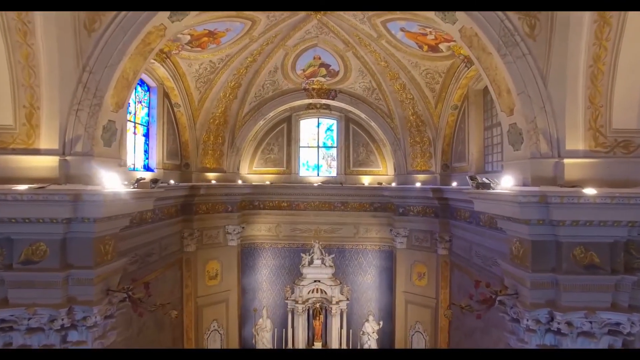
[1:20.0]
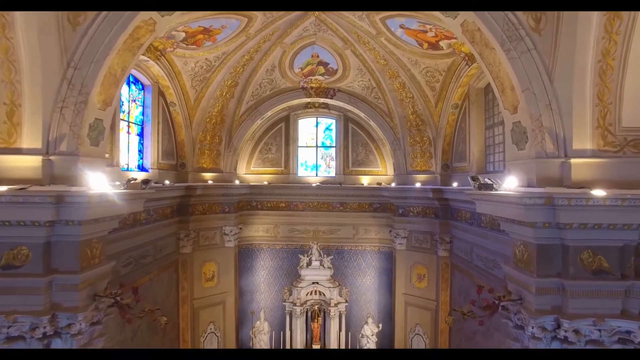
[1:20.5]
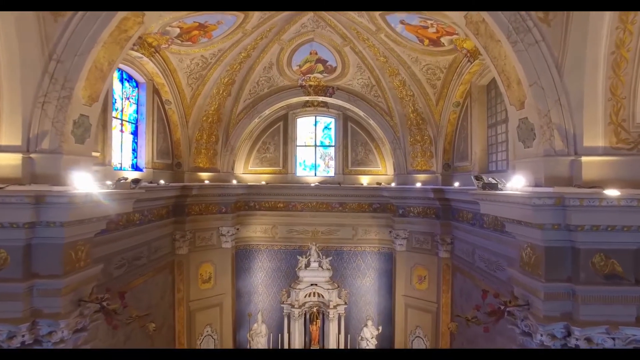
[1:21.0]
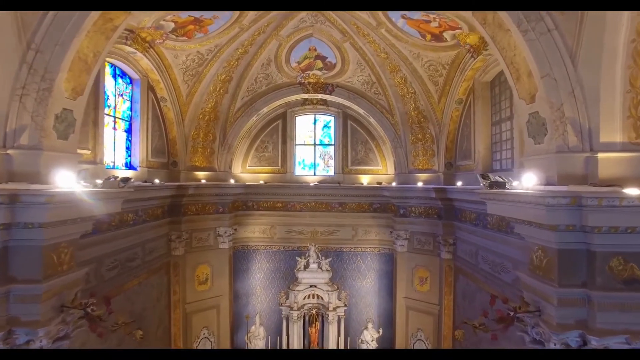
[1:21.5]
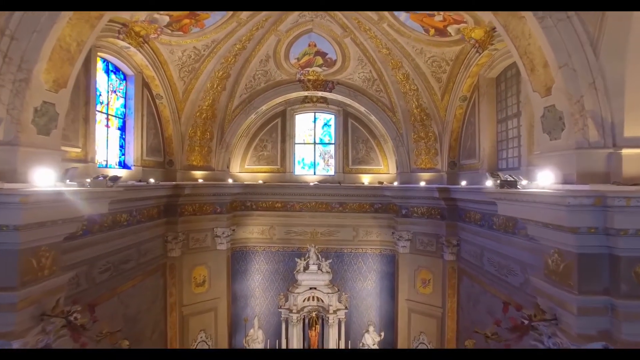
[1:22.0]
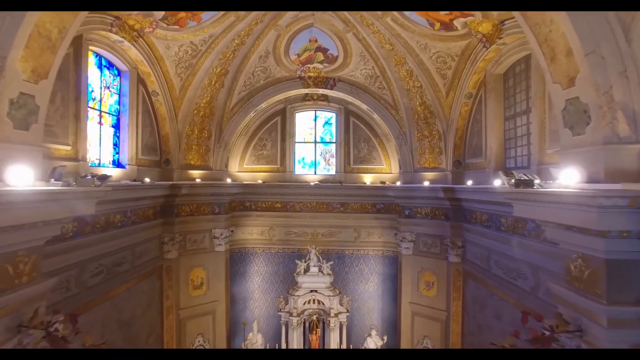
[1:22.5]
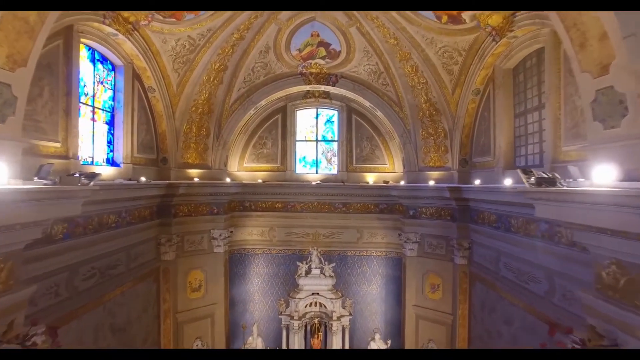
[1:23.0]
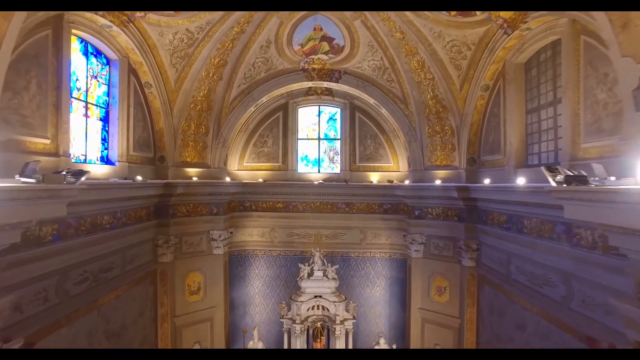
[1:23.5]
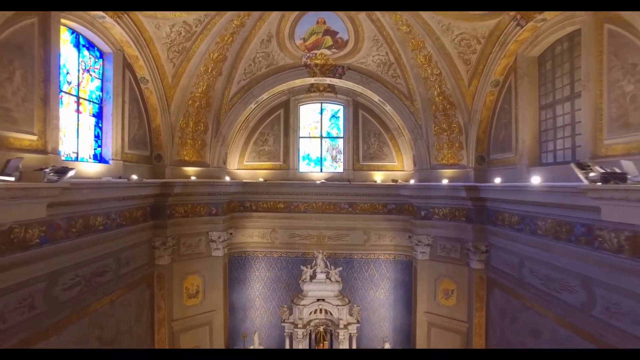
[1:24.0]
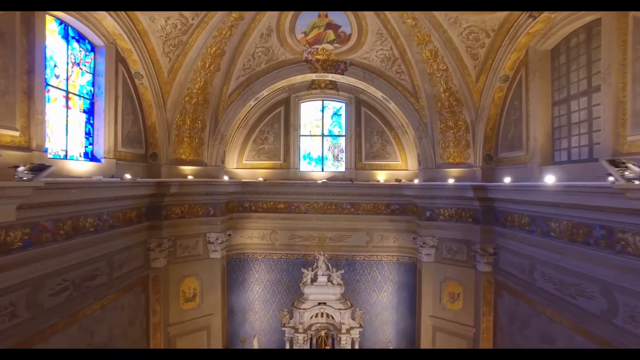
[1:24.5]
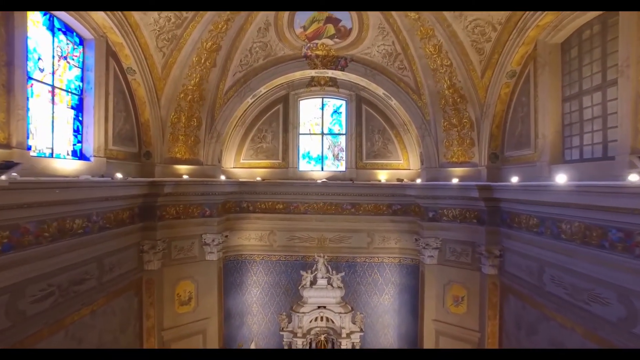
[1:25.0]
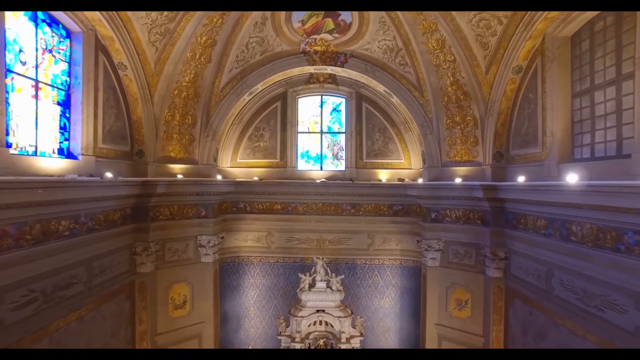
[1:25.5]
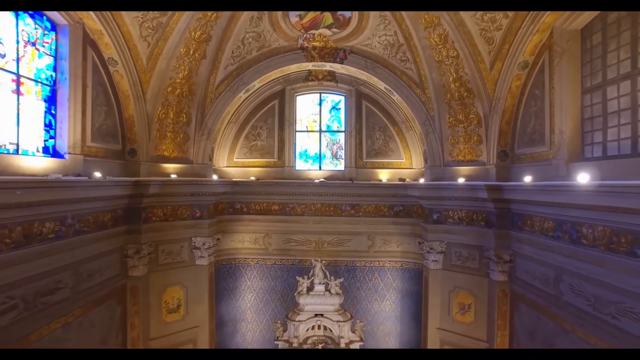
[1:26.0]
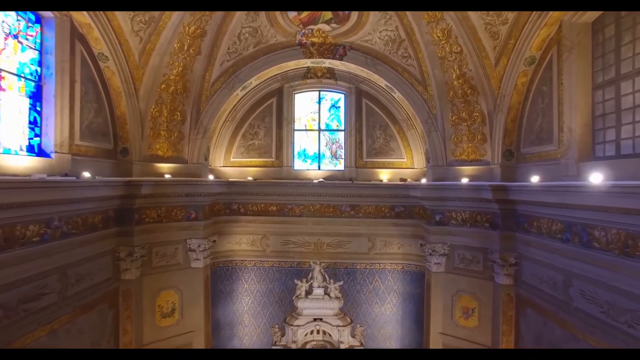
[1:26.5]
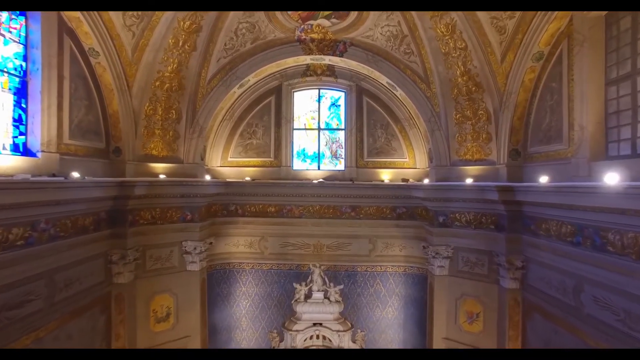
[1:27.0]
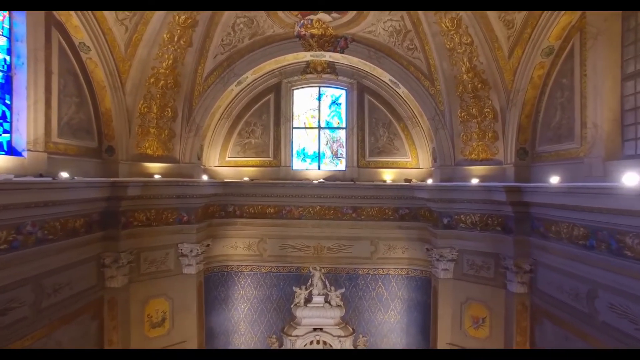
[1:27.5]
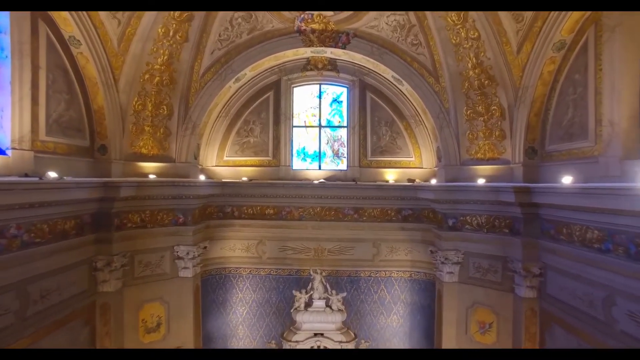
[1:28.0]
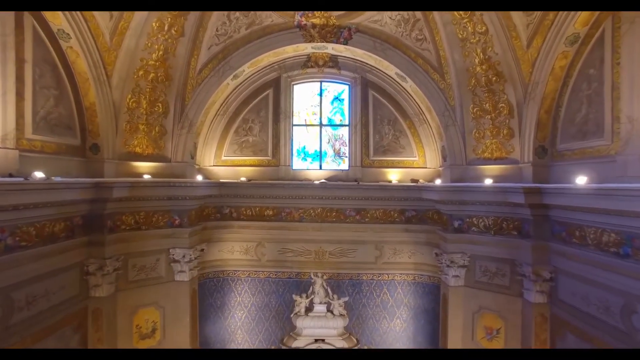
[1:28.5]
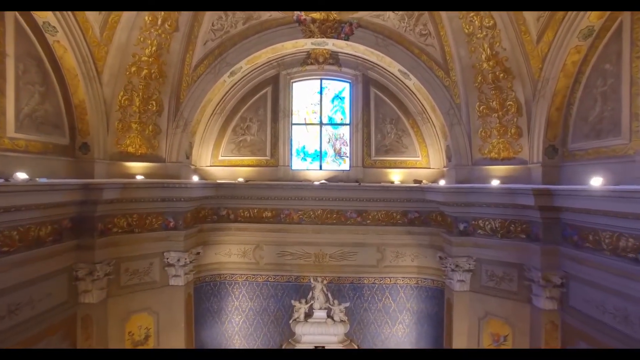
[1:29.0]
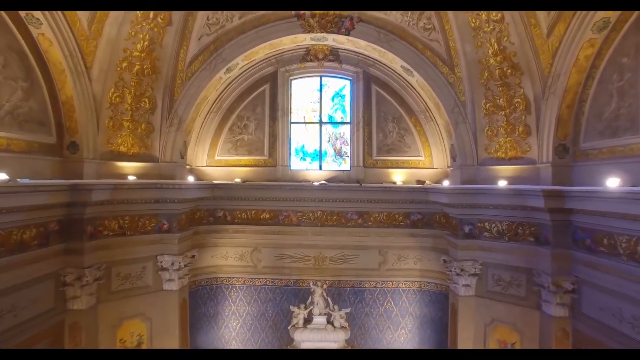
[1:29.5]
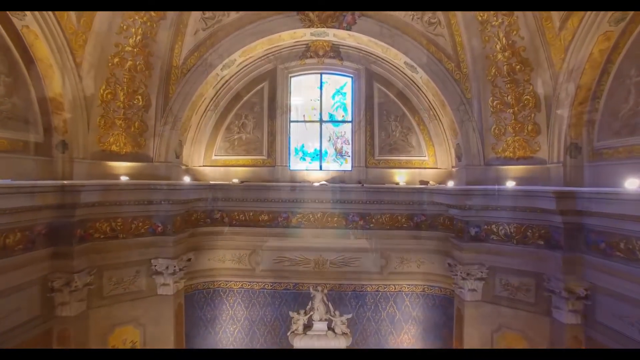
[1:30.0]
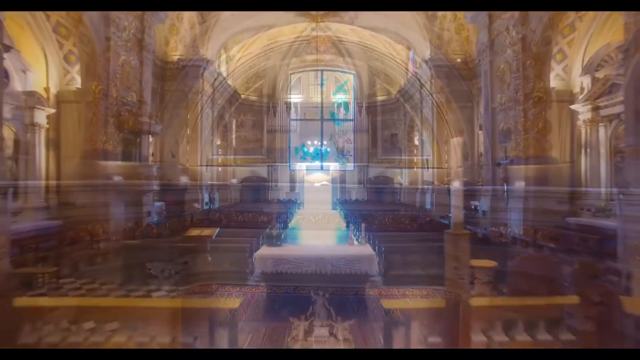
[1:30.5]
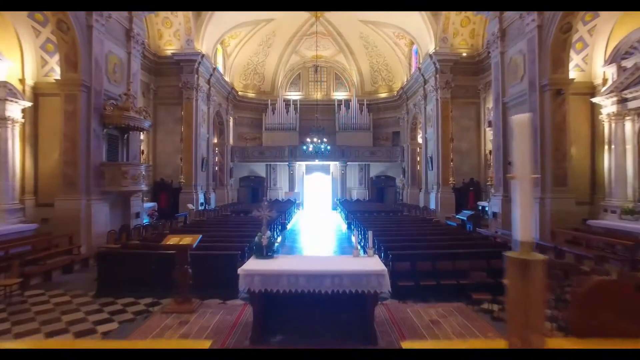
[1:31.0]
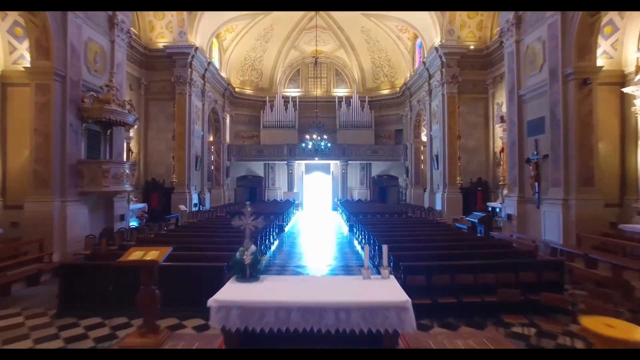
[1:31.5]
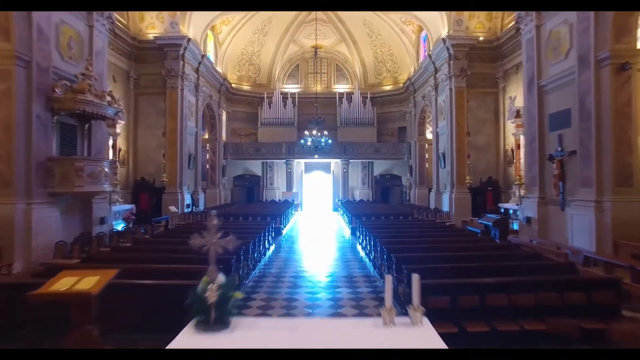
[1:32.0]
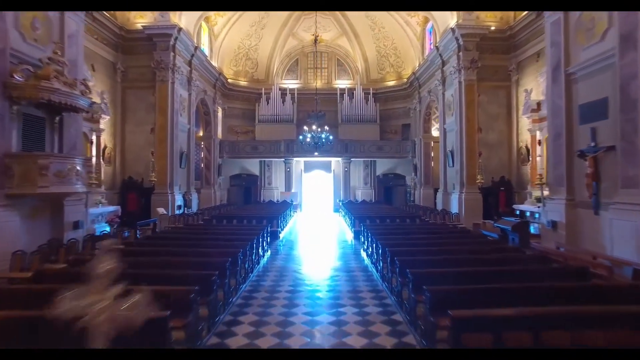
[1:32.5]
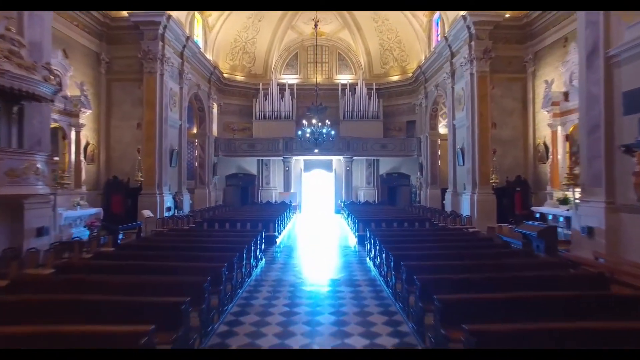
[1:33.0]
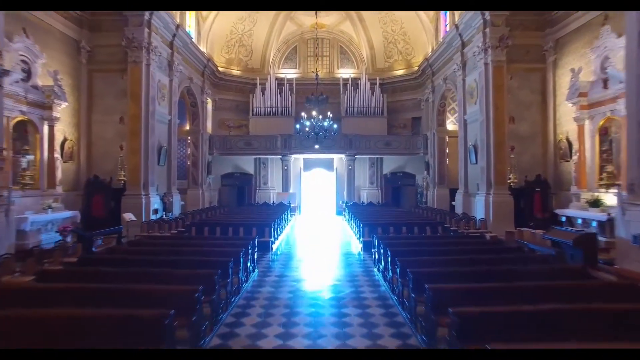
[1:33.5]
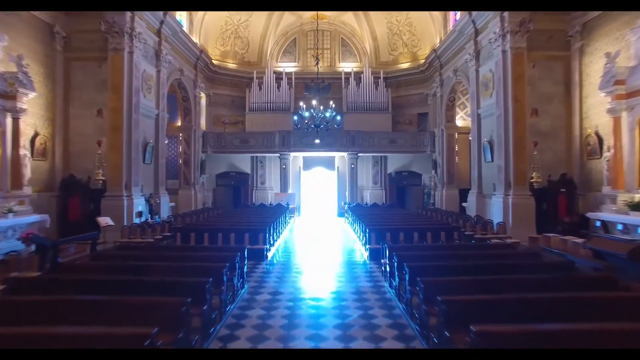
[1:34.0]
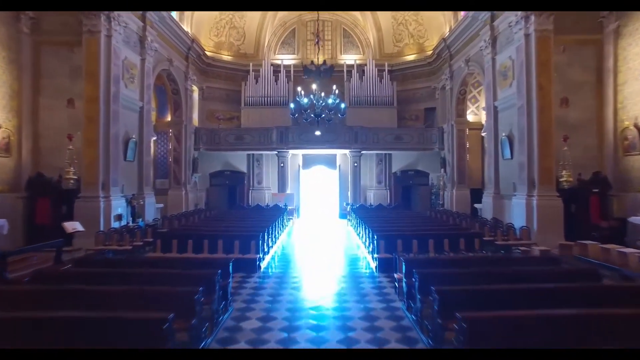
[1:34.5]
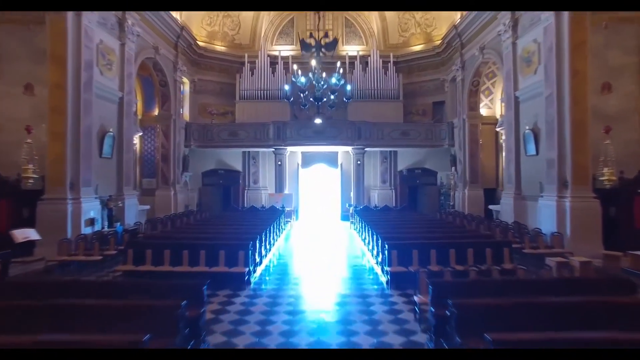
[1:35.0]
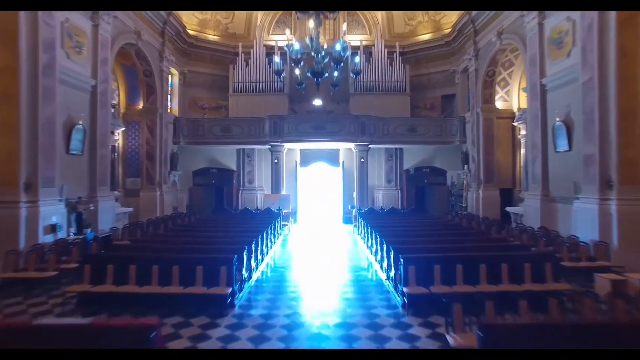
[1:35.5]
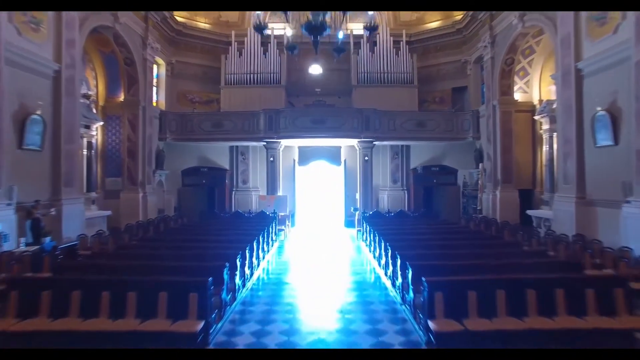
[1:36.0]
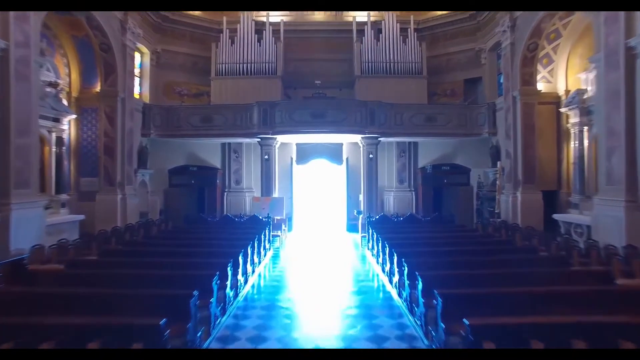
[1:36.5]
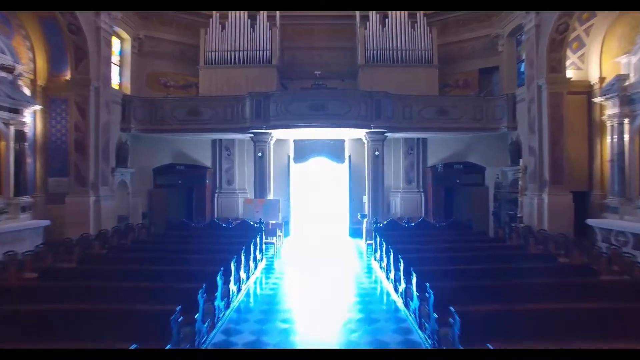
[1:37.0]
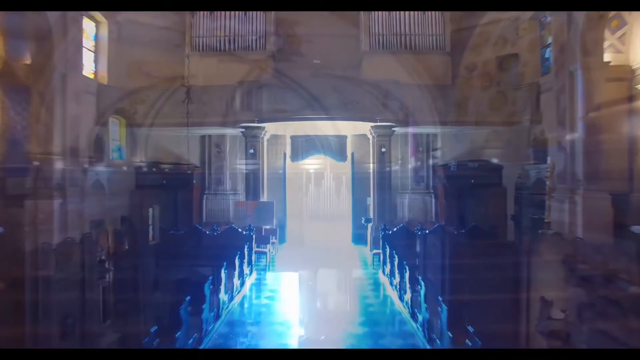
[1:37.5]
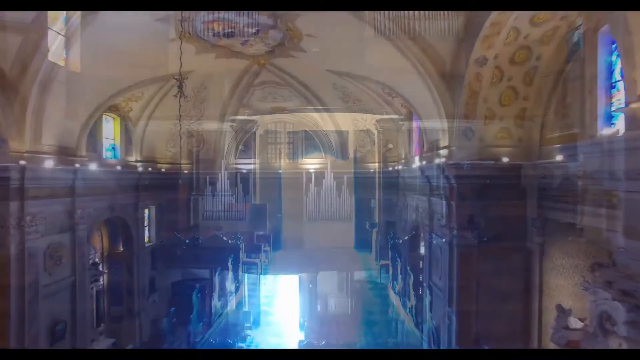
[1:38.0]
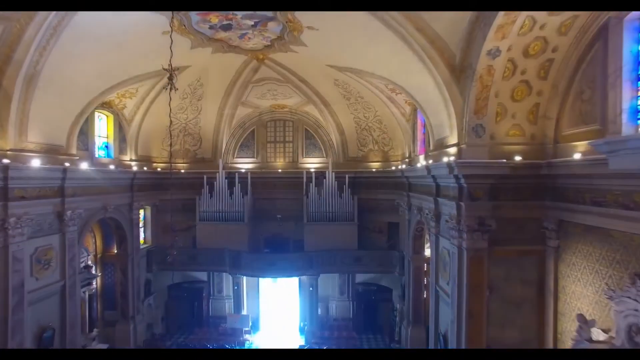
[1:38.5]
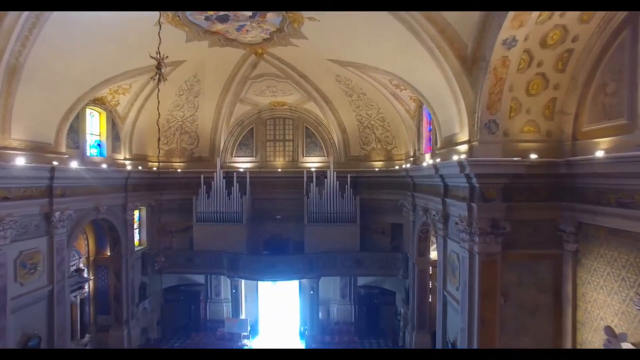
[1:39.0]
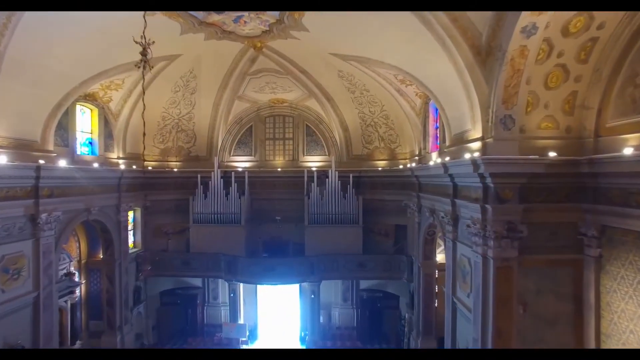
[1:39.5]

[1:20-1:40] The camera looks toward the ceiling at the vault work and the intricate artwork on the panels between the ribs. Stained glass windows let in light, and teardrop-shaped painted panels show presumably religious scenes with blue sky and robed figures, presumably biblical figures. The altarpiece is visible at the base of the frame. The camera zooms forward toward the stained glass, then the view changes completely, zooming up the nave from about halfway along as the light changes to a bright glare. It zooms toward the pipe organ, which has a traditional arrangement of big wind pipes, then rapidly flips back out to the starting point. There is very bright light as the camera rapidly flicks from one scene to the next.